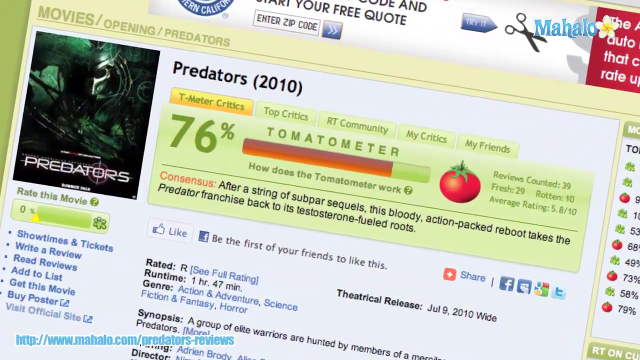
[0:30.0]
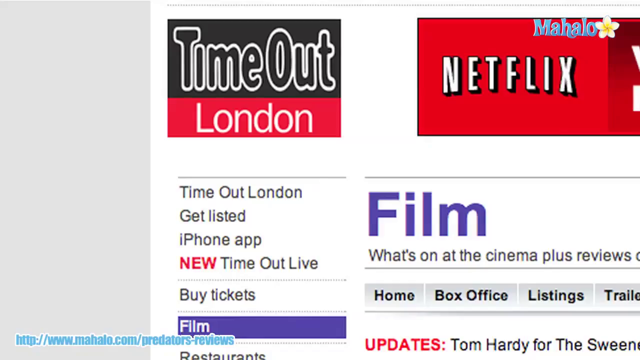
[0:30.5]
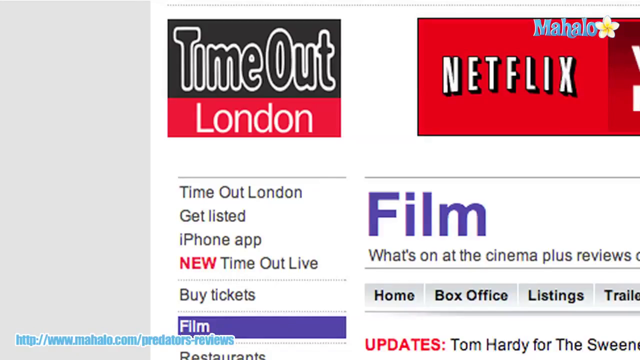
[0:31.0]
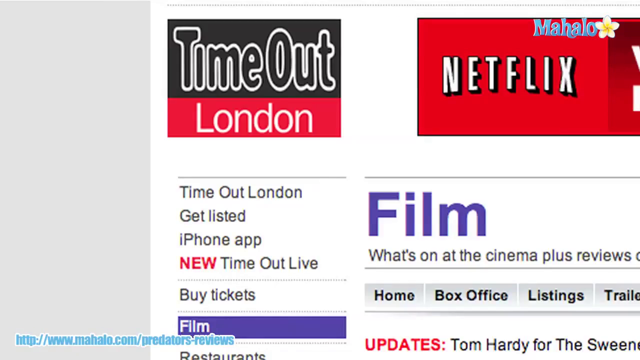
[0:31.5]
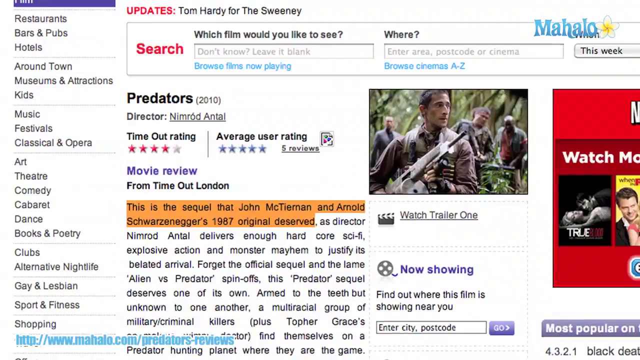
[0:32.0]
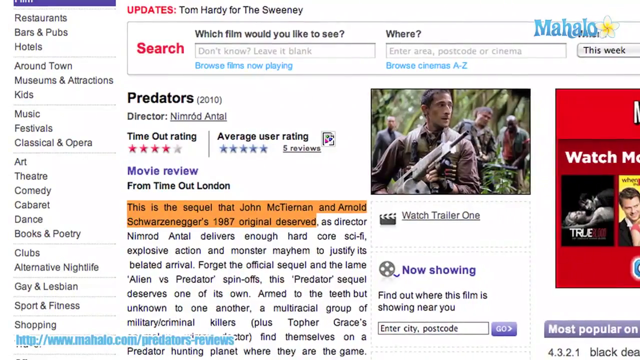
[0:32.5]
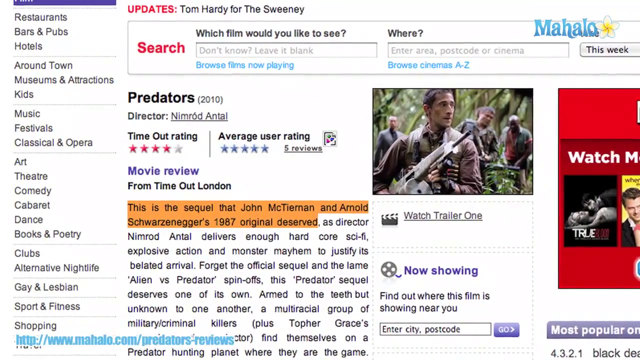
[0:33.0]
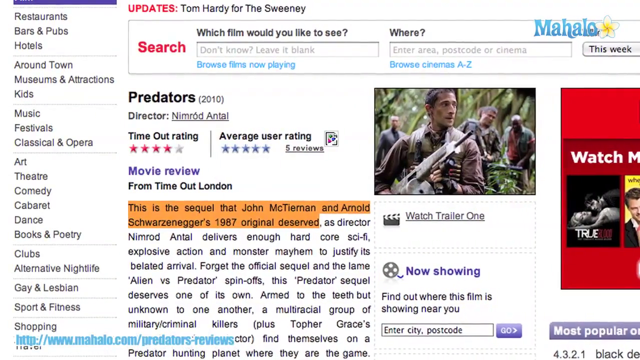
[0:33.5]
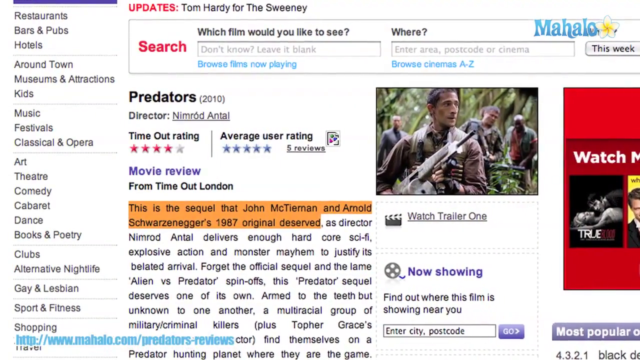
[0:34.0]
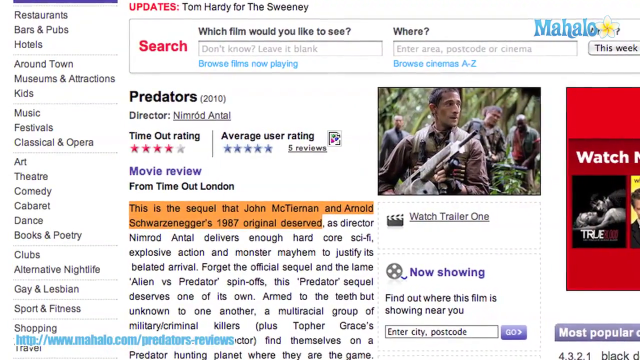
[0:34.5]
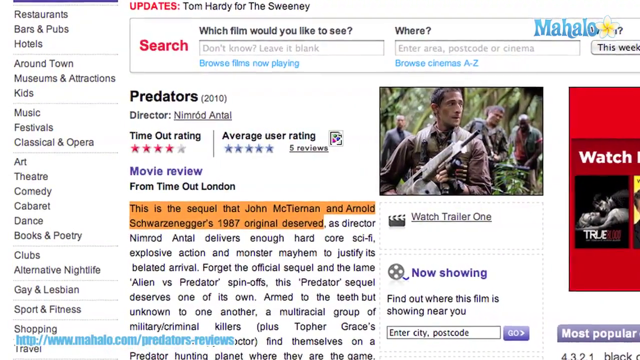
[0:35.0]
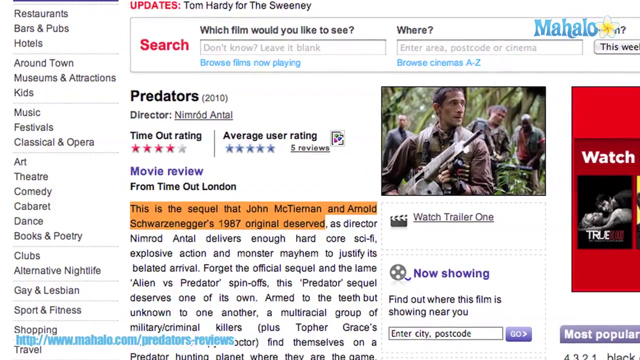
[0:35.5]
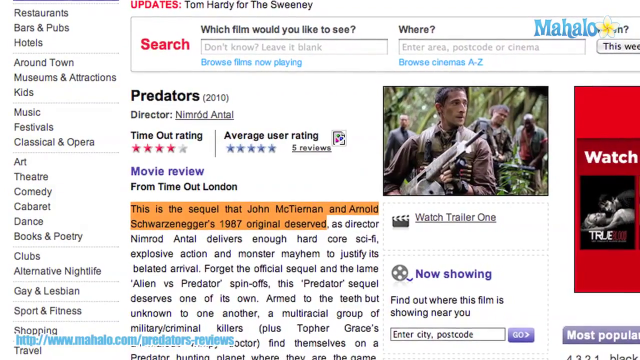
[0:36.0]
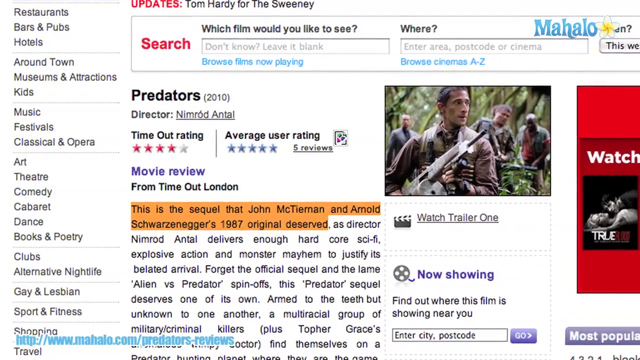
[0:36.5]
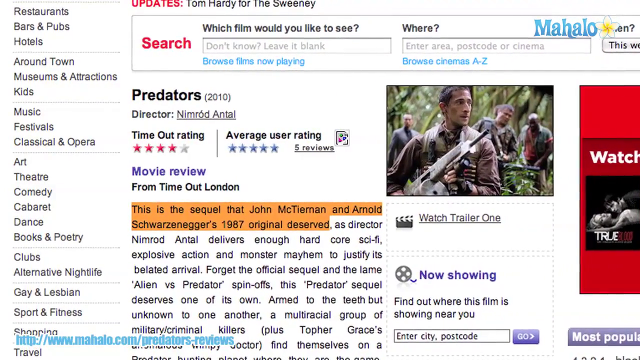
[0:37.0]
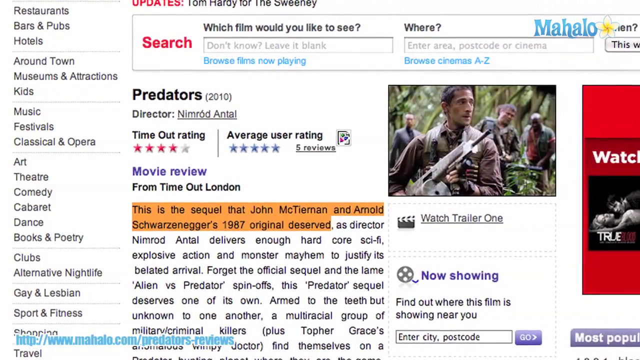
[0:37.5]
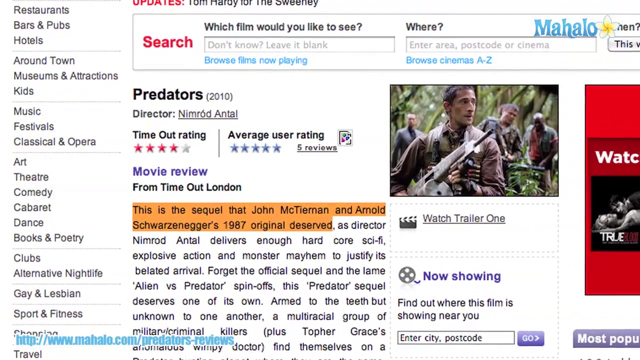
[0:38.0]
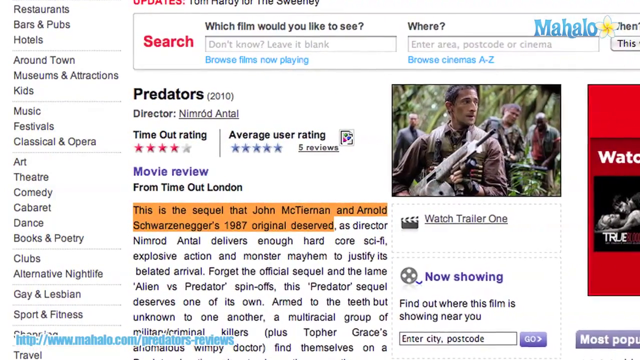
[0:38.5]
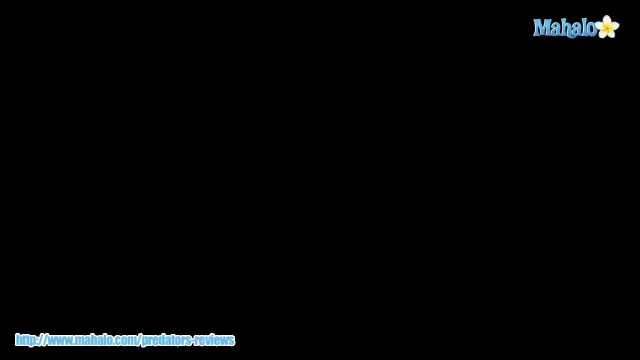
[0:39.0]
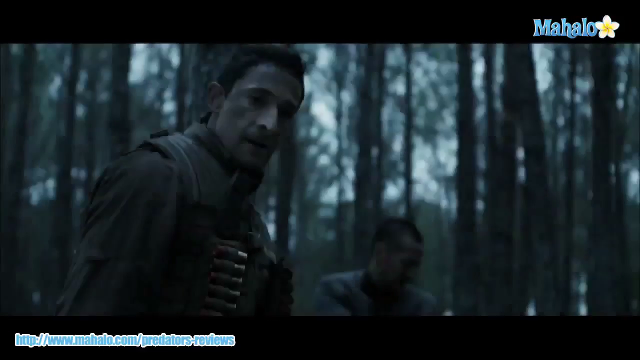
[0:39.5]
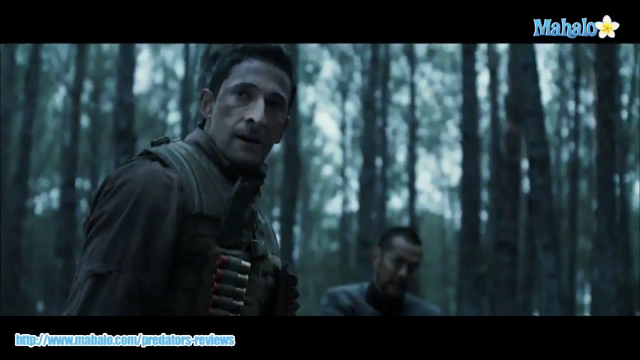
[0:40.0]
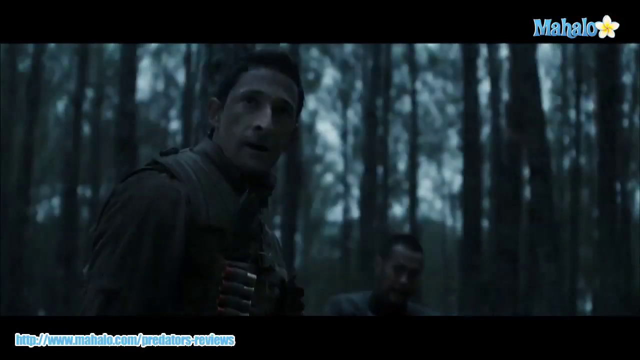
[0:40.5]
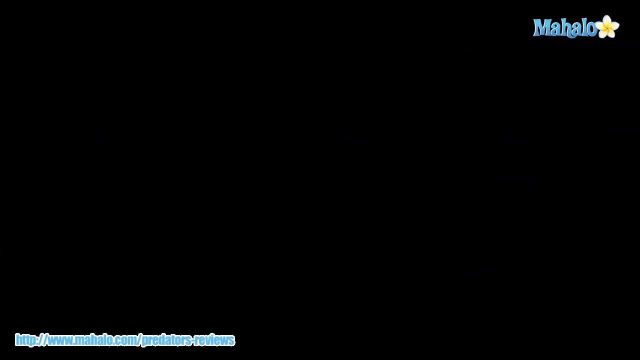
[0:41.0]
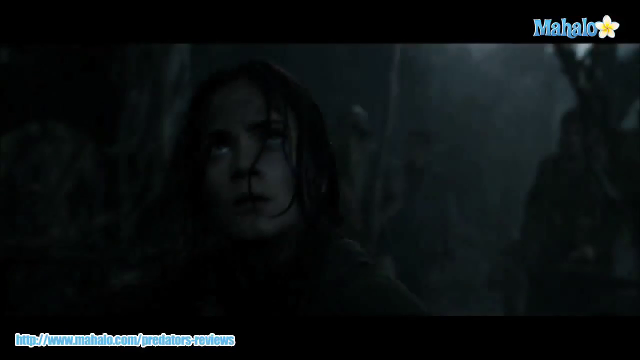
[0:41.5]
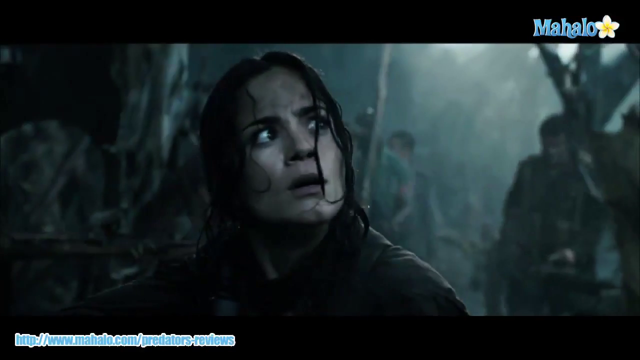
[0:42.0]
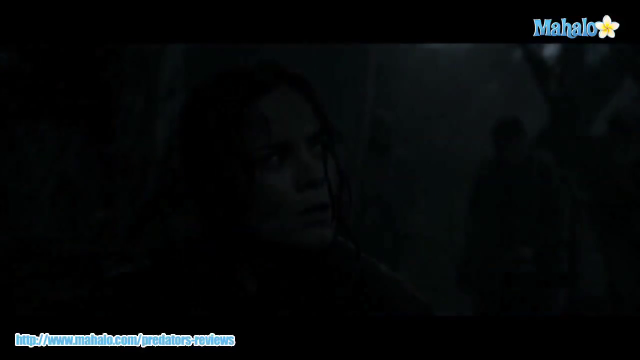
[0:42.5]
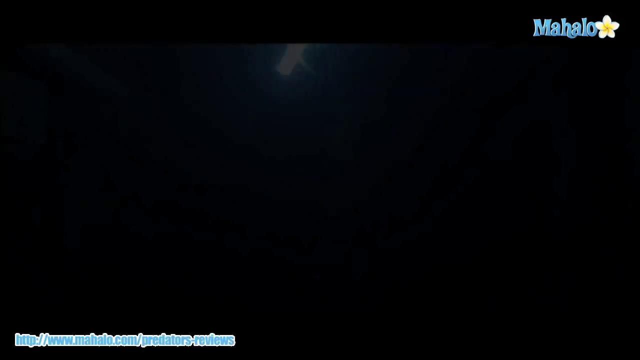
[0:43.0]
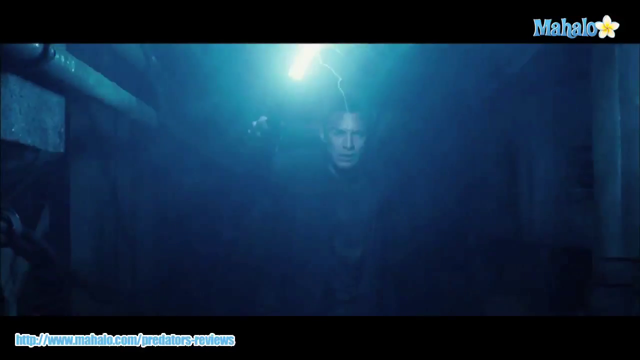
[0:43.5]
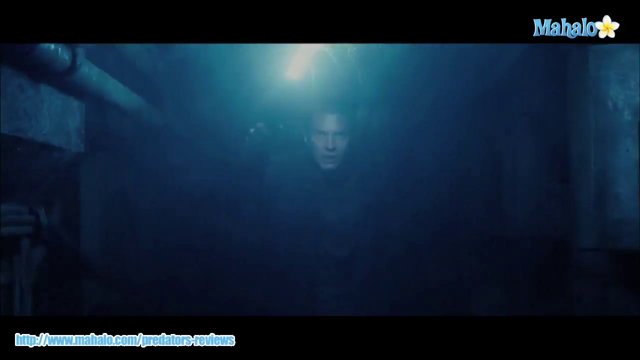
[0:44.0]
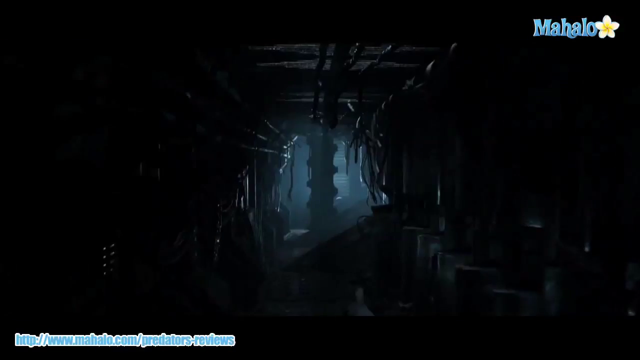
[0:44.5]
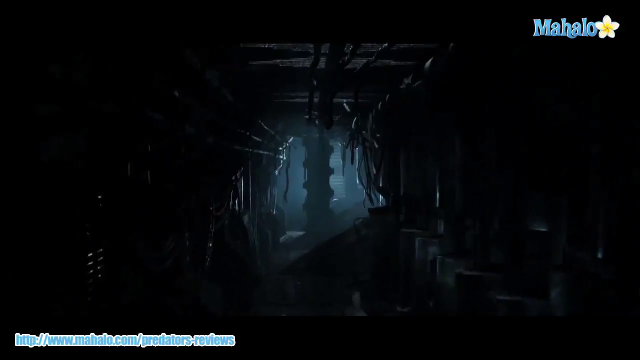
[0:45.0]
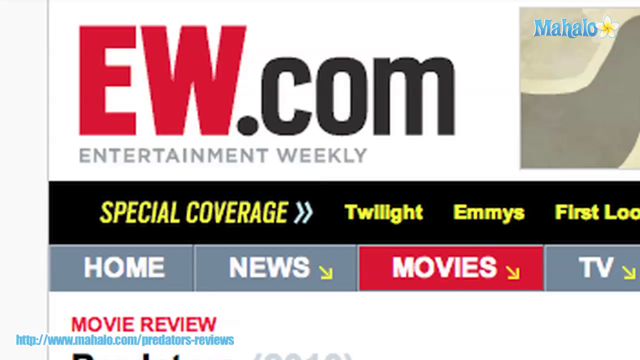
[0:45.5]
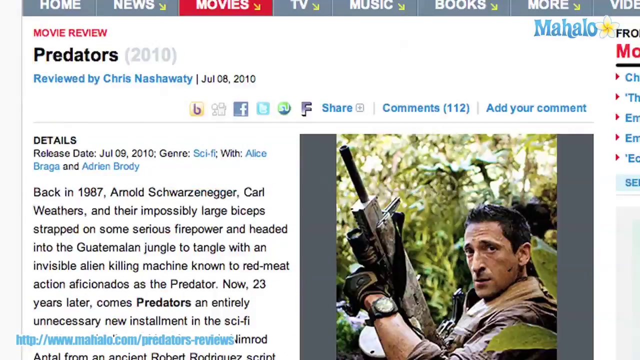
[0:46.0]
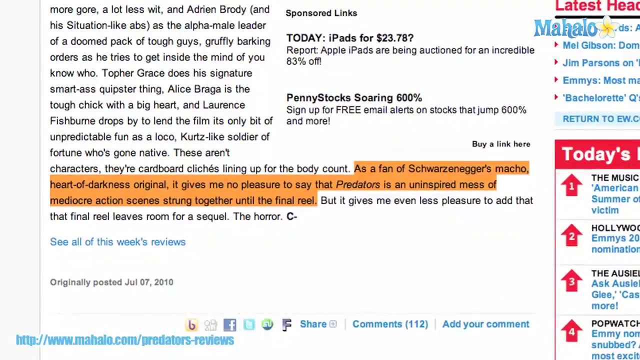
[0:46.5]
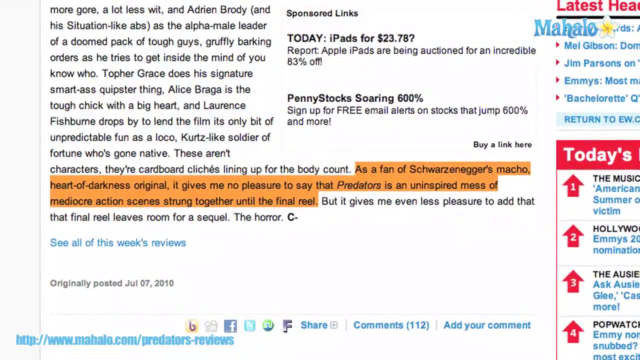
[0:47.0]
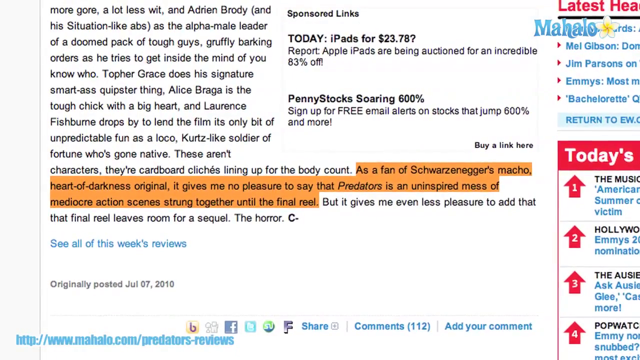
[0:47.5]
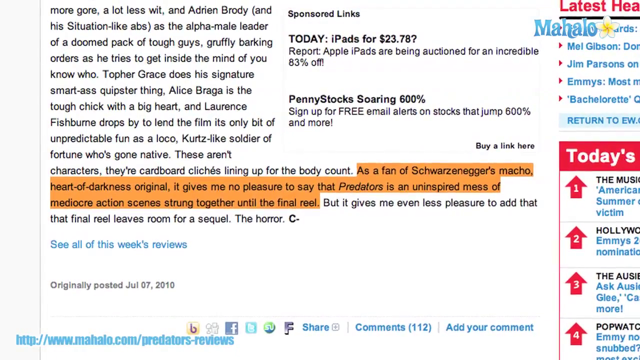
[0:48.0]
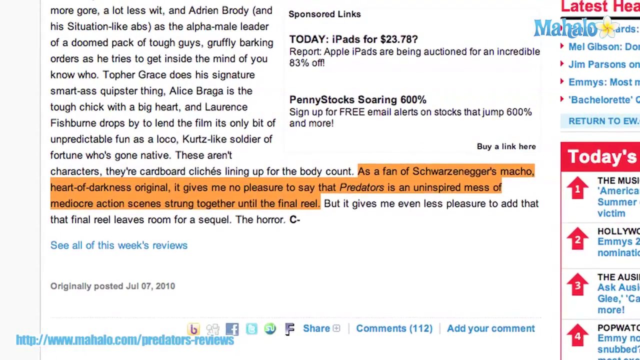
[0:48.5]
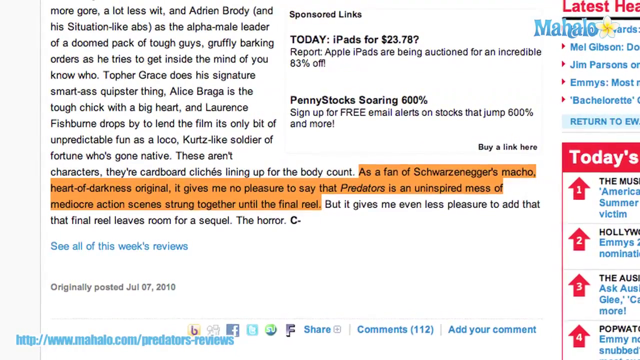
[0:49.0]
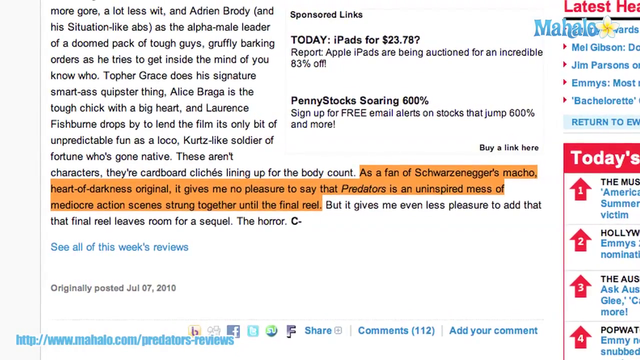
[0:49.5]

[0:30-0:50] A Rotten Tomatoes website page for the movie Predators (2010) is shown, open on a tab called "Team Metacritics", with a 76% tomatometer. The consensus reads: "after a string of subpar sequels, this bloody action-packed reboot takes the Predator franchise back to its testosterone-filled roots." Next comes a Time Out London film review of Predators (2010), directed by Nimrud Antal, saying this is "a sequel that John McTierman and Arnold Schwarzenegger's 1987 original deserved." A glimpse of the movie follows: some actors wearing bullets, a woman who looks absolutely scared with her eyes shown, and then a man going into the dark. After that, an ew.com page about the movie appears, saying "It gives me no pleasure to say that Predator is an inspired mess of mediocre action scenes strung together until the final reel."